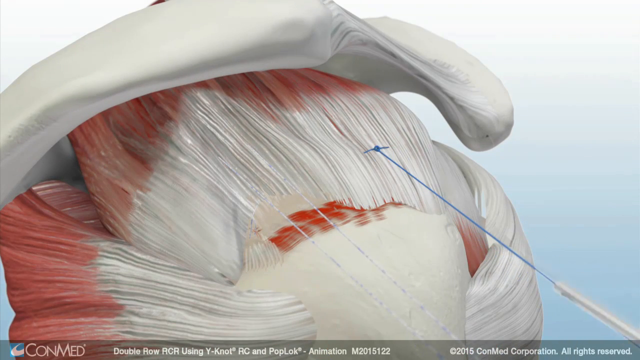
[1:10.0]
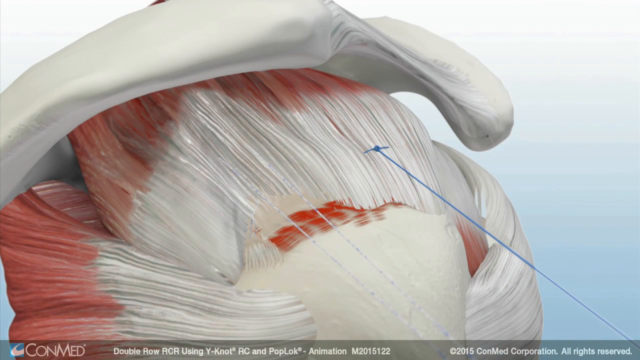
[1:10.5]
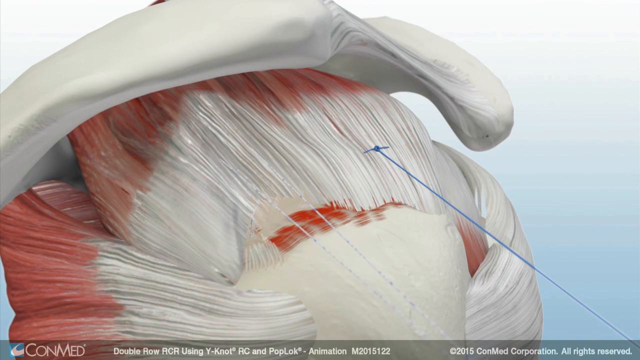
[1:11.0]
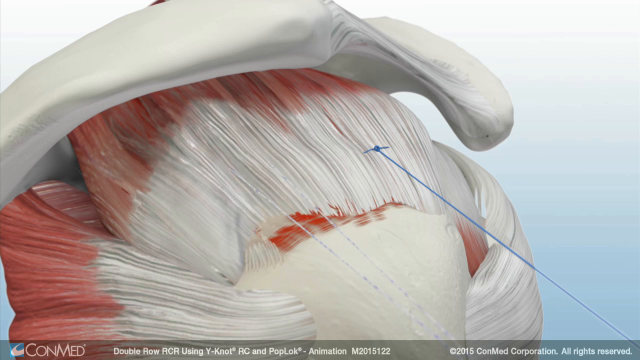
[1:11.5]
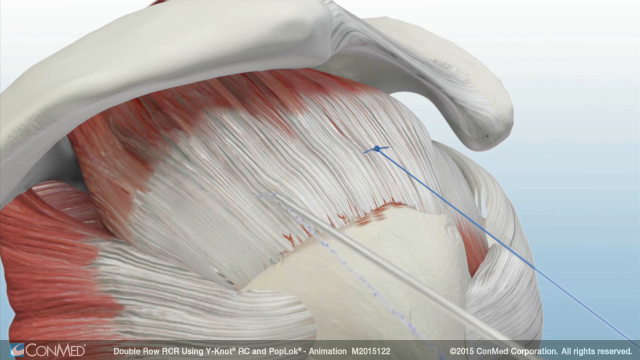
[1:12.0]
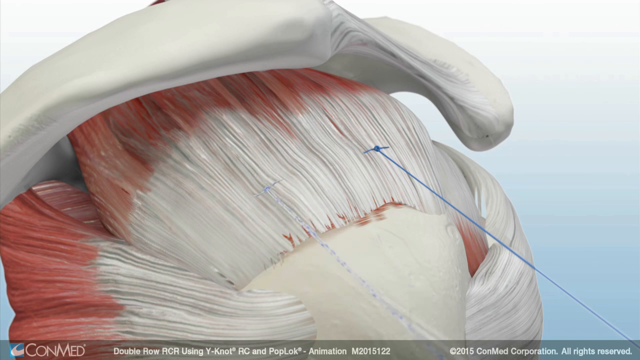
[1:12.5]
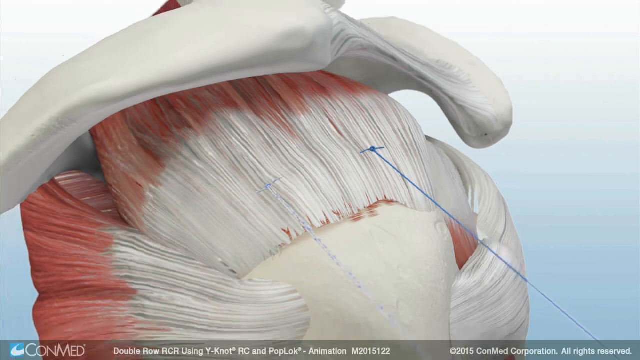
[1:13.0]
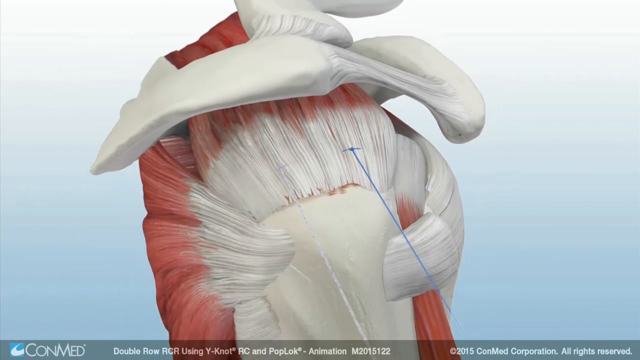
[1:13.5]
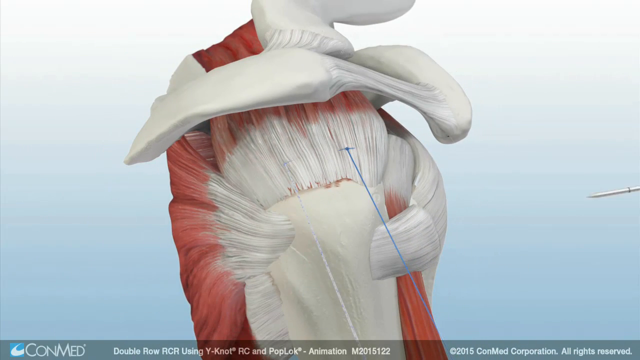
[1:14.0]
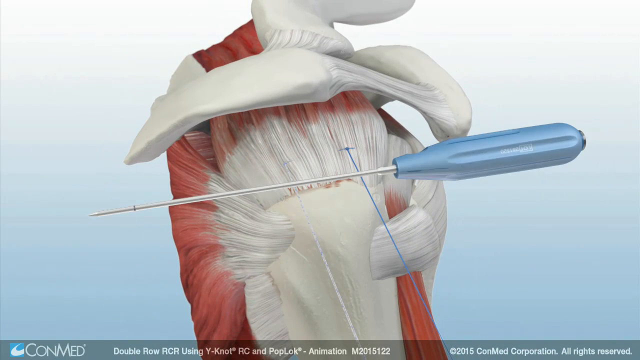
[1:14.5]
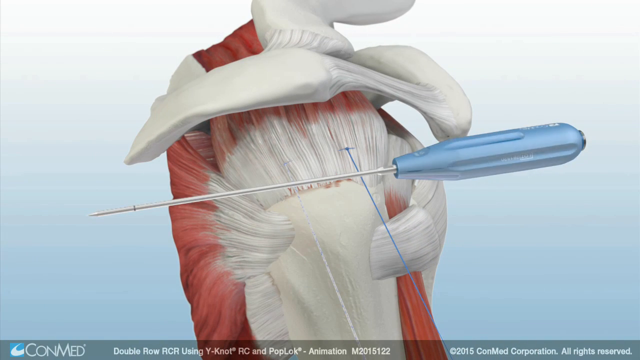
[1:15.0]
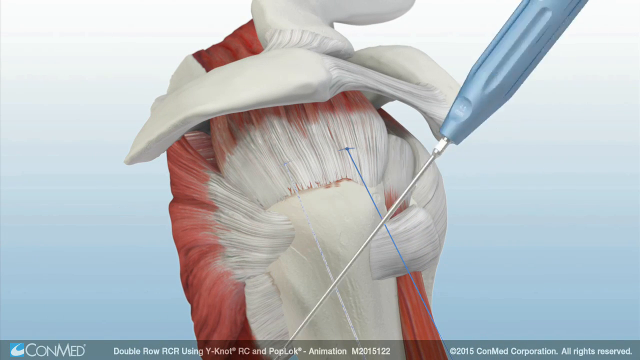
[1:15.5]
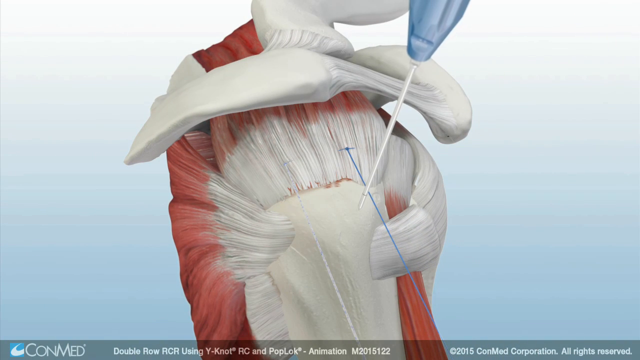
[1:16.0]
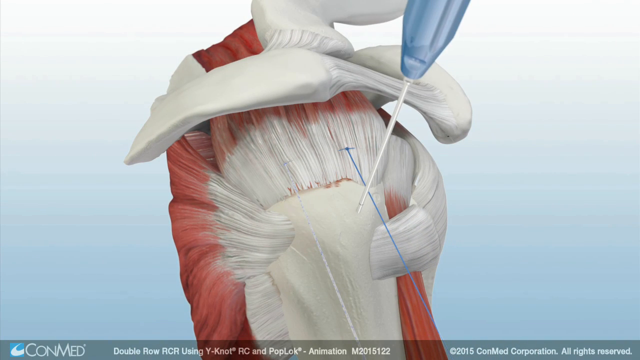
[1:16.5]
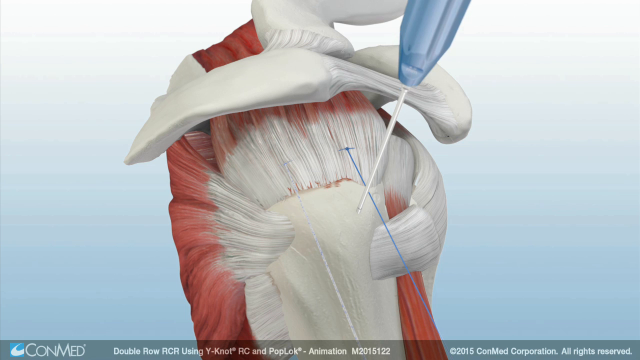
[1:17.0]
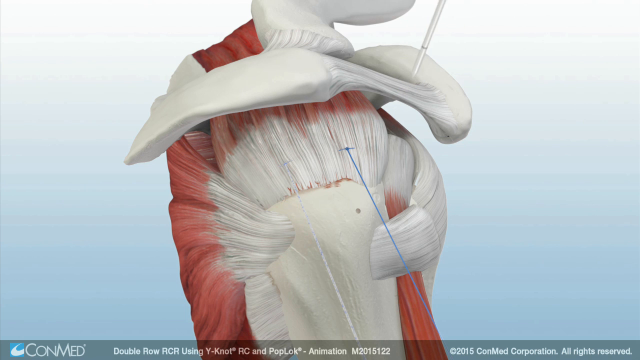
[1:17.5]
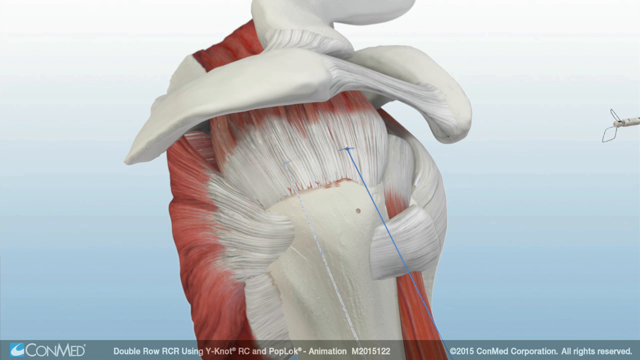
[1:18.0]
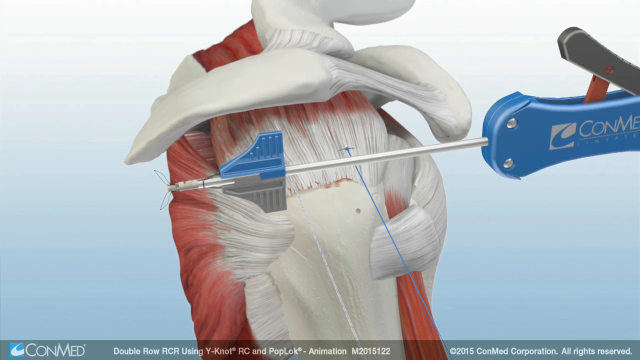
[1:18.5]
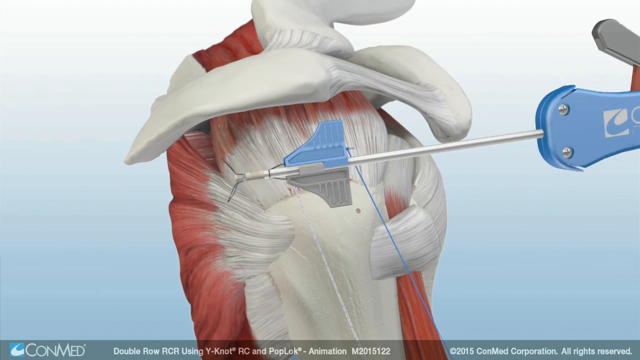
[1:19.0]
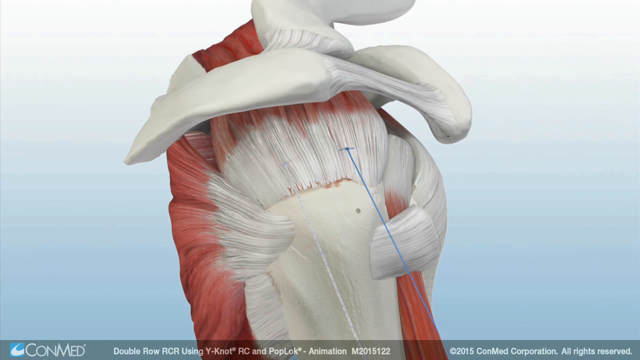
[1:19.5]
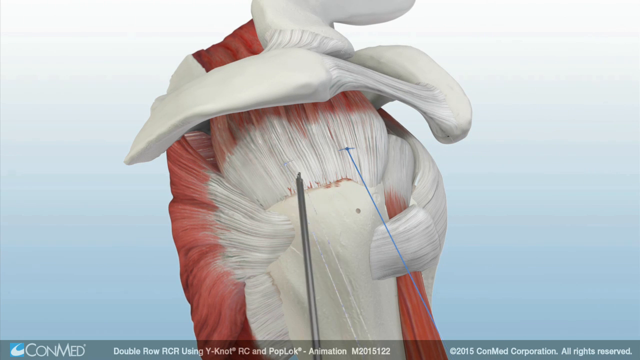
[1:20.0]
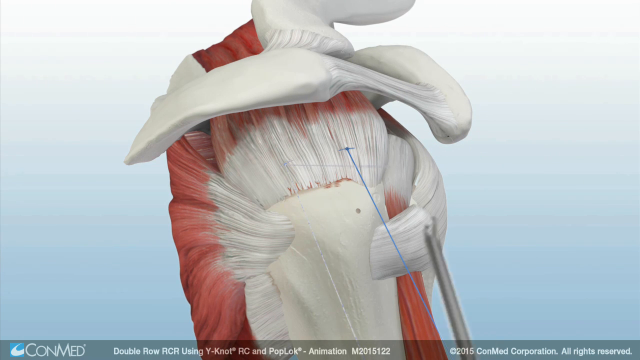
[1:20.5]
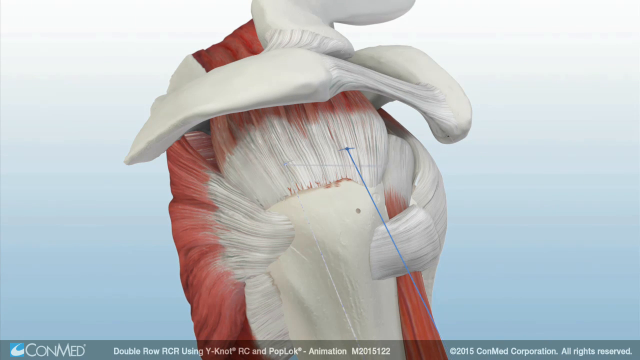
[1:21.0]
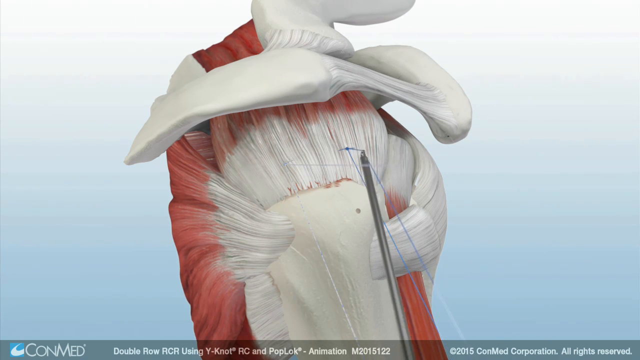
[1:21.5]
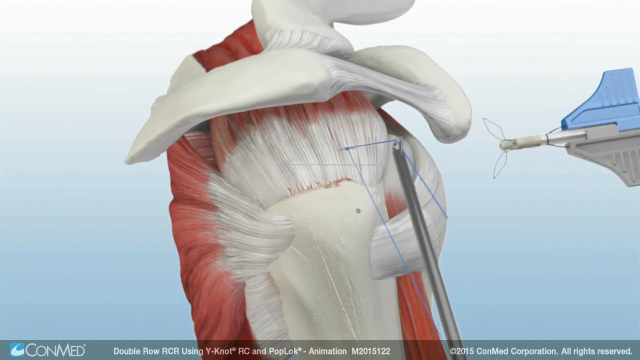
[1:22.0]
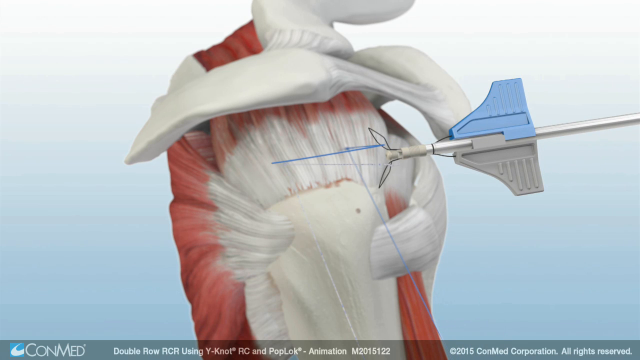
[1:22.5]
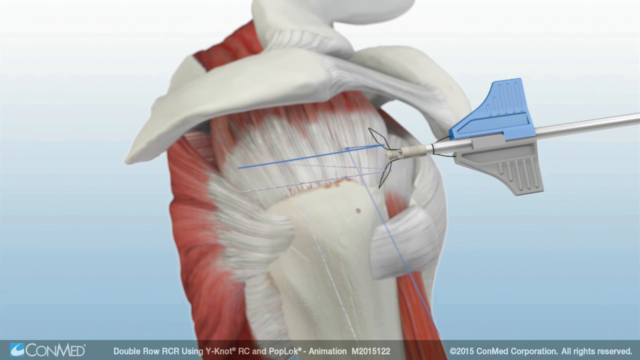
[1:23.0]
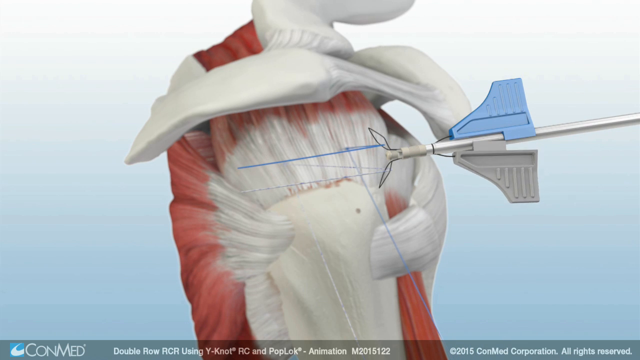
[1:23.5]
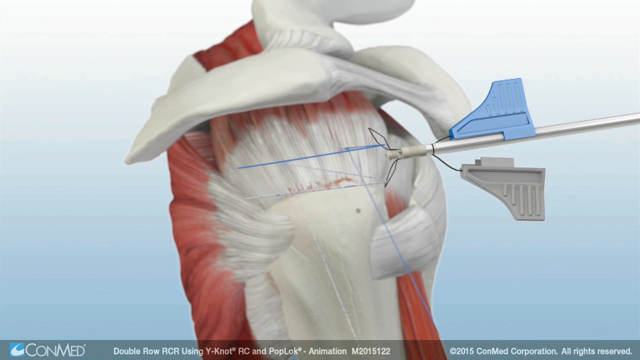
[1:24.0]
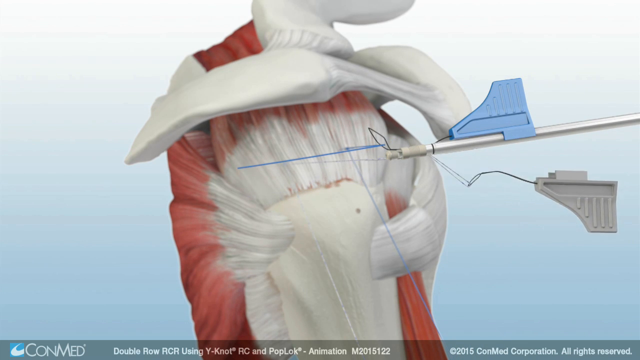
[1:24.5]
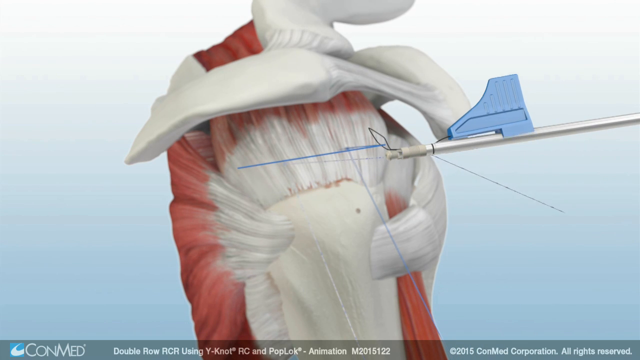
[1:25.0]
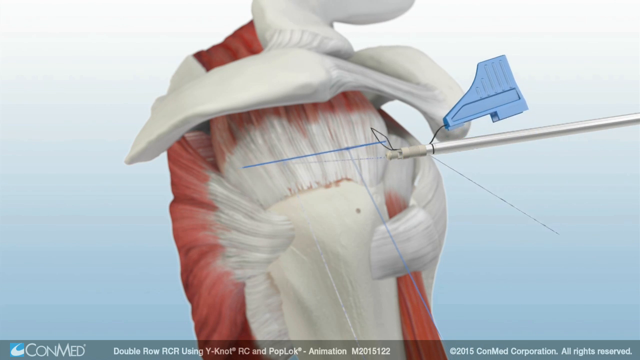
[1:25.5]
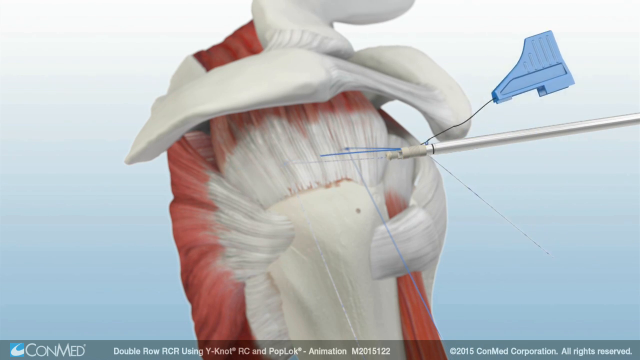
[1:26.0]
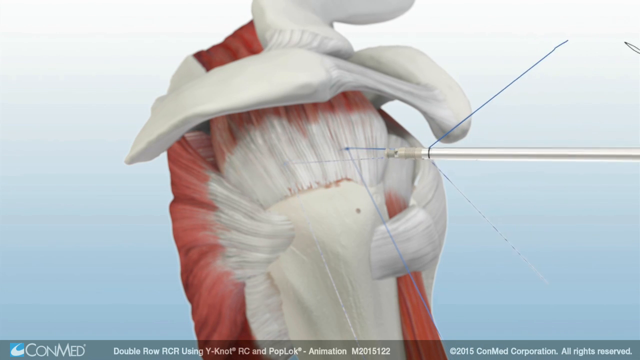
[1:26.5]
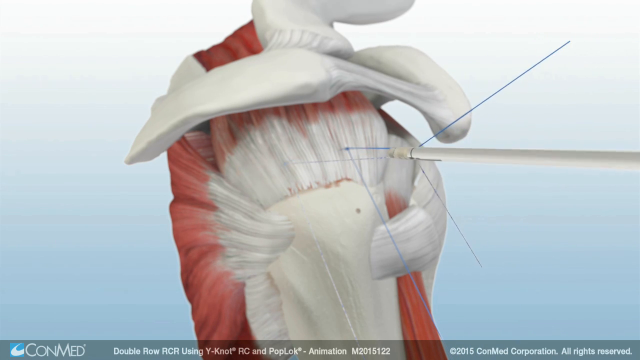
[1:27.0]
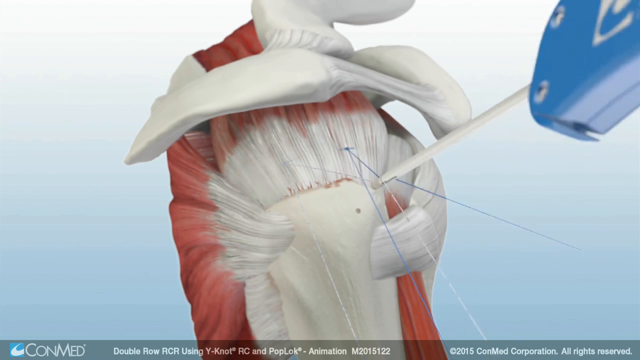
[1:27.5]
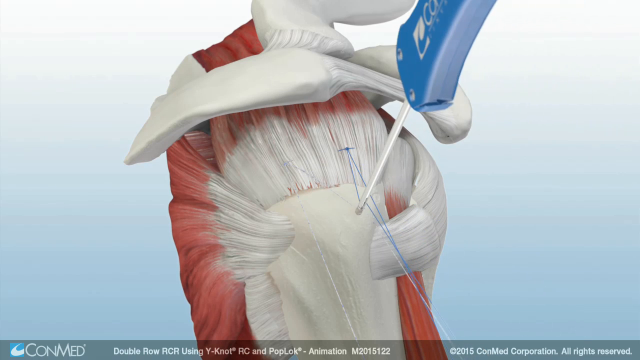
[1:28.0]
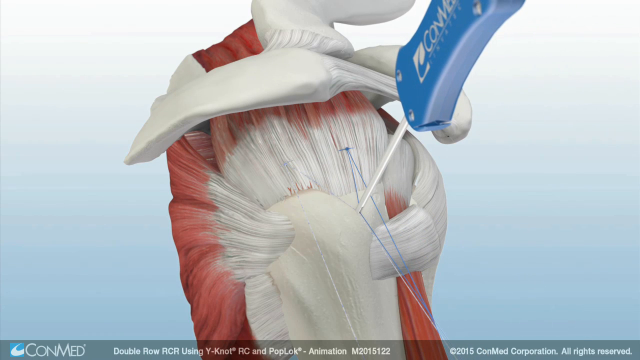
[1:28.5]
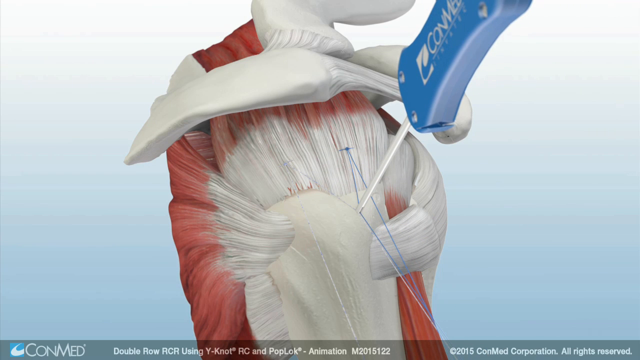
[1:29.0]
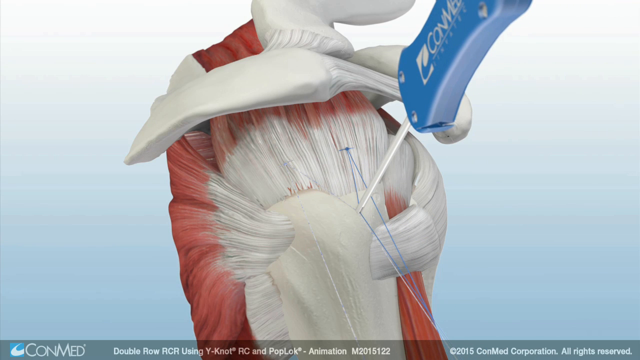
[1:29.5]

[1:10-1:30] An animated illustration shows a surgical procedure on the shoulder socket, with the muscles, bones and tendons exposed. A long opaque or silvery instrument is used to suture the tendons back onto the bone, pulling the blue surgical threads. The instrument looks like a screwdriver with a sharp point and a blue head or handle. It punctures a hole into the upper arm shoulder bone. A different instrument, also with a deep blue handle, is then used to loop the hanging surgical threads, pull them tight, and pull them deep into the punctured hole to continue the suturing. The muscles are dark pink, the bone is white, and the tendons are also a shade of white.